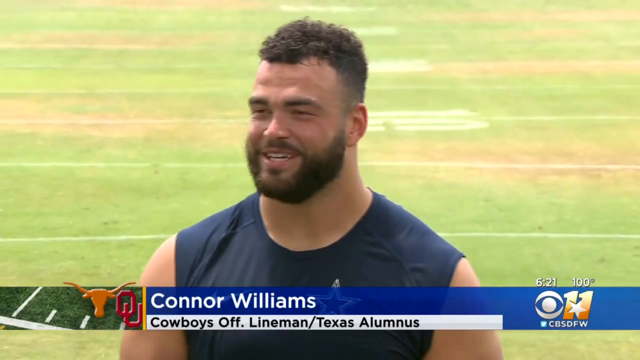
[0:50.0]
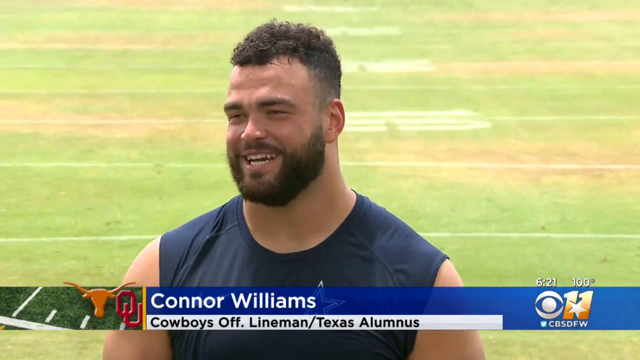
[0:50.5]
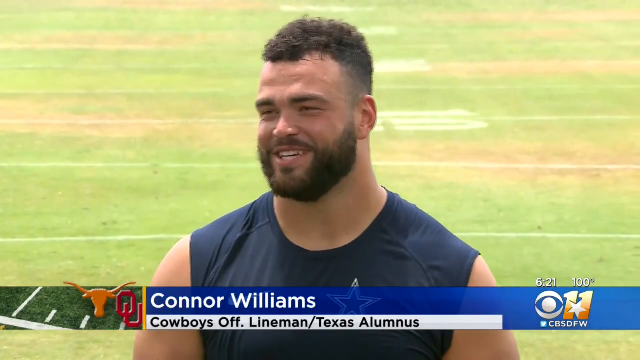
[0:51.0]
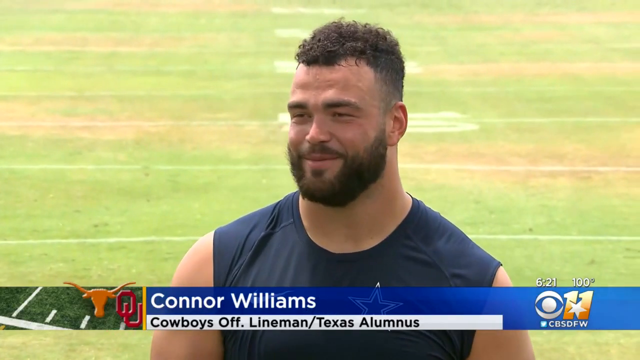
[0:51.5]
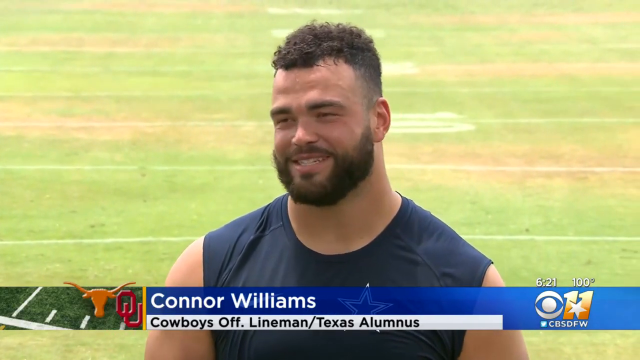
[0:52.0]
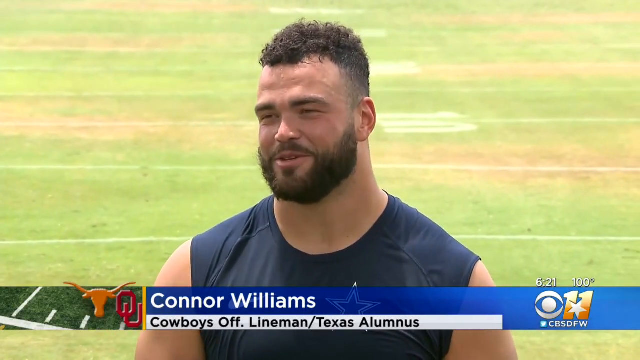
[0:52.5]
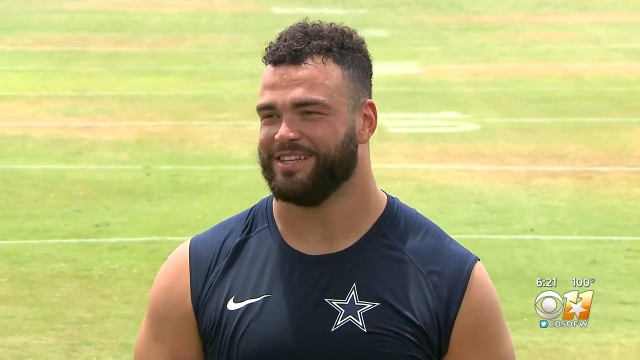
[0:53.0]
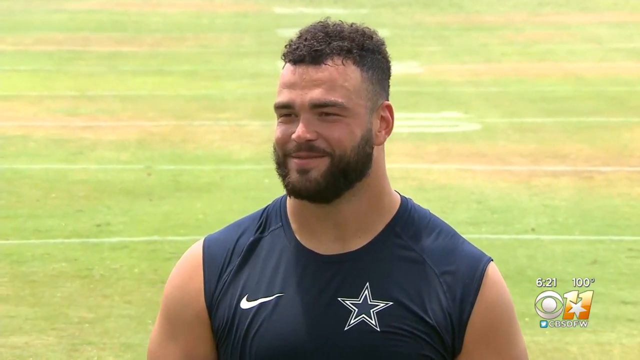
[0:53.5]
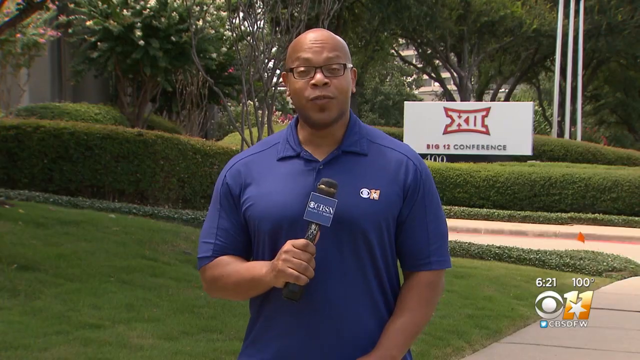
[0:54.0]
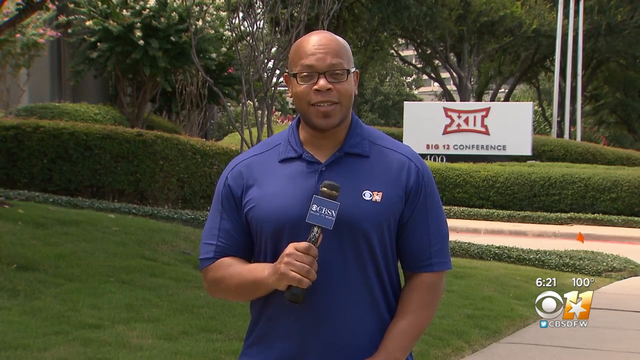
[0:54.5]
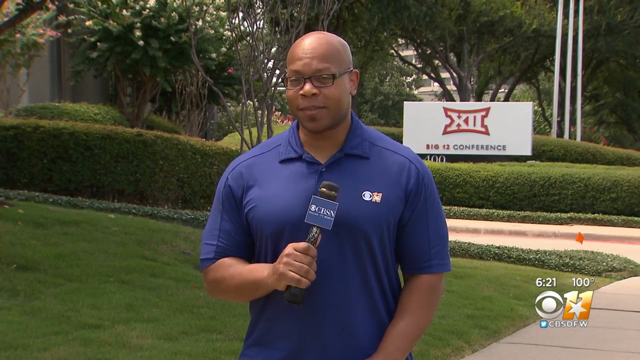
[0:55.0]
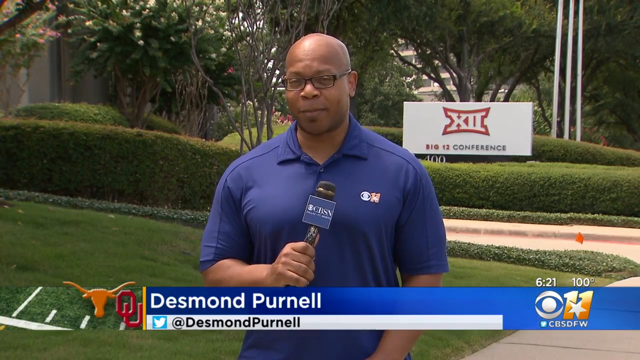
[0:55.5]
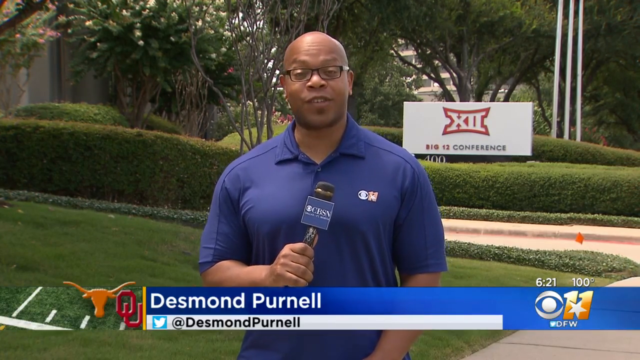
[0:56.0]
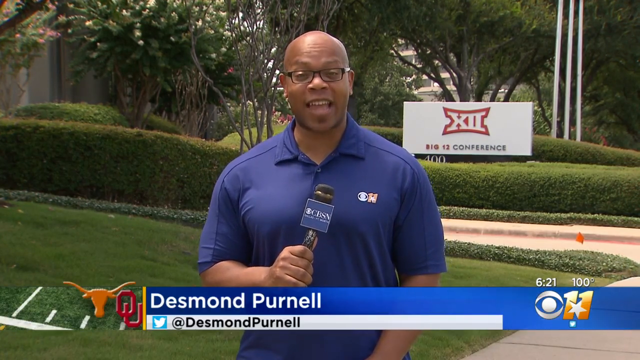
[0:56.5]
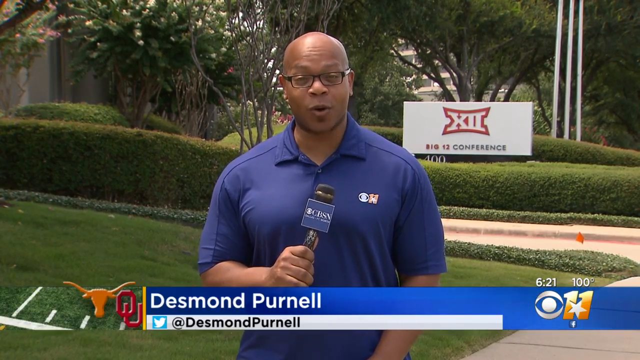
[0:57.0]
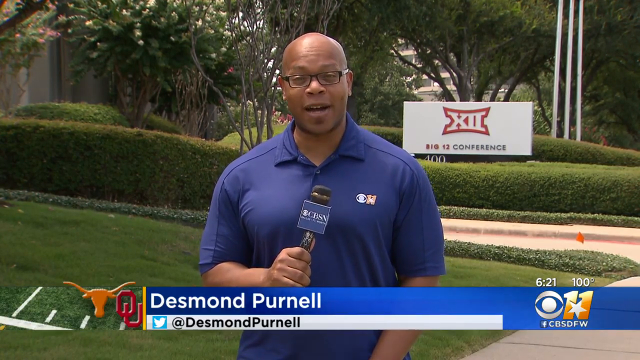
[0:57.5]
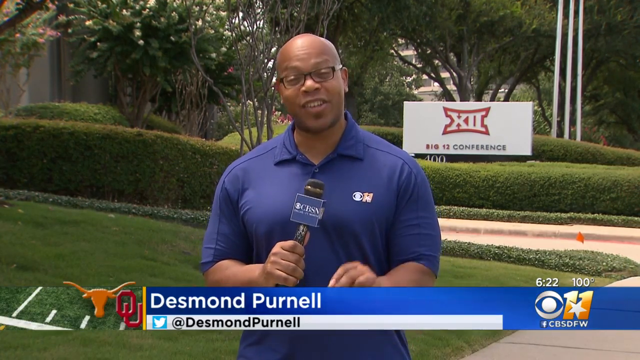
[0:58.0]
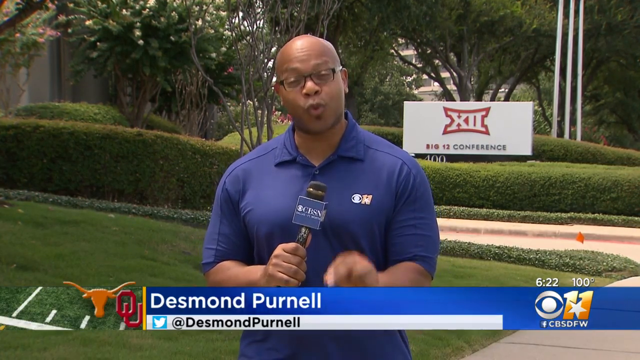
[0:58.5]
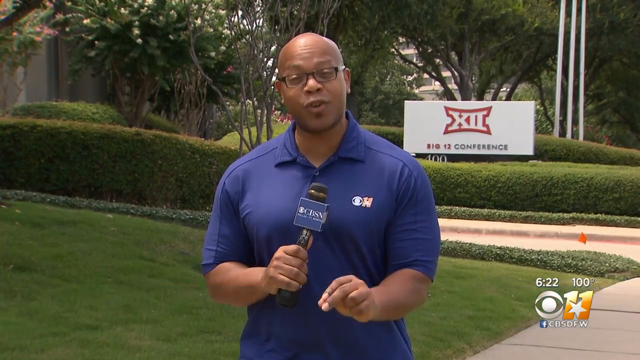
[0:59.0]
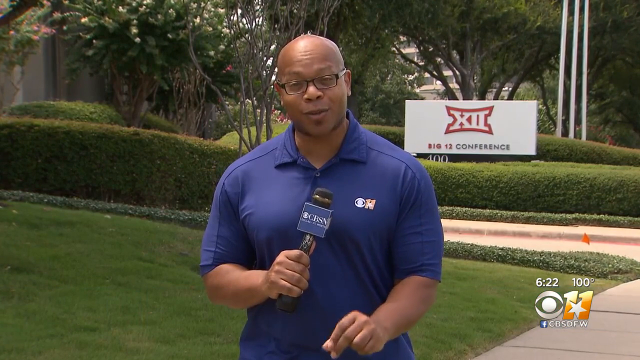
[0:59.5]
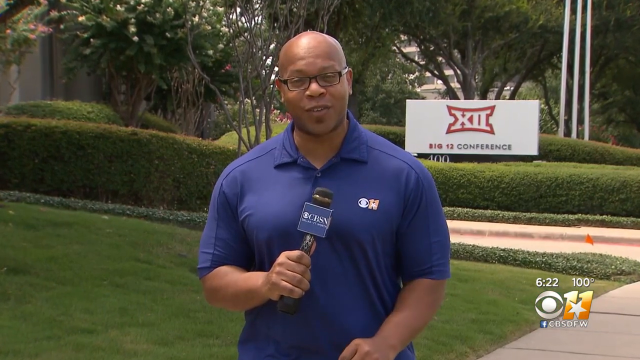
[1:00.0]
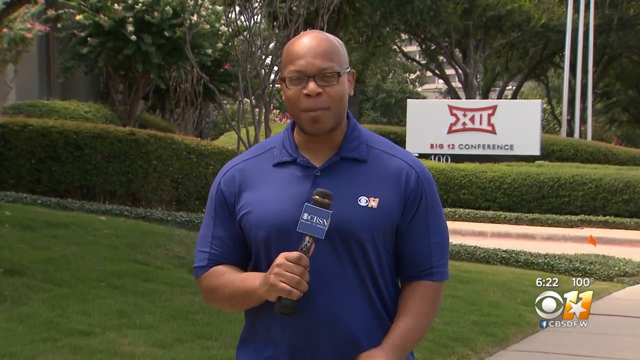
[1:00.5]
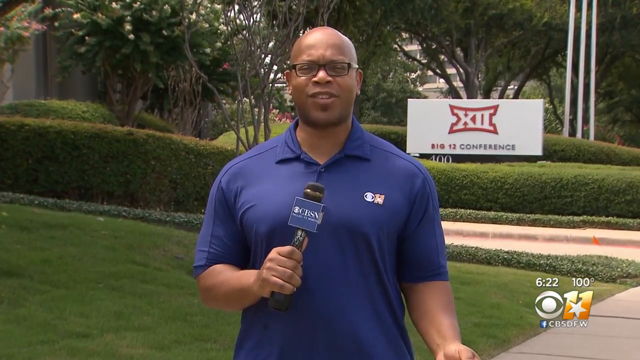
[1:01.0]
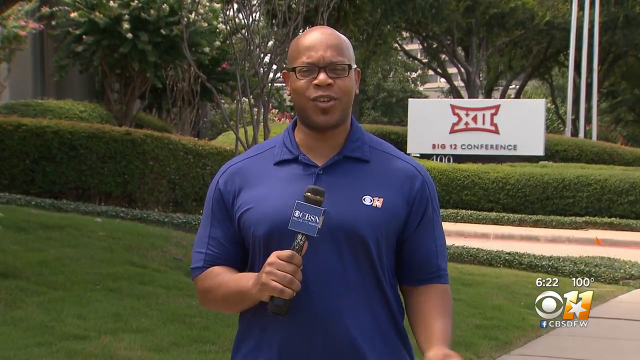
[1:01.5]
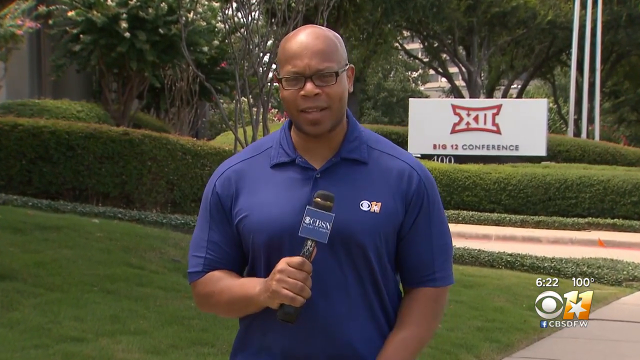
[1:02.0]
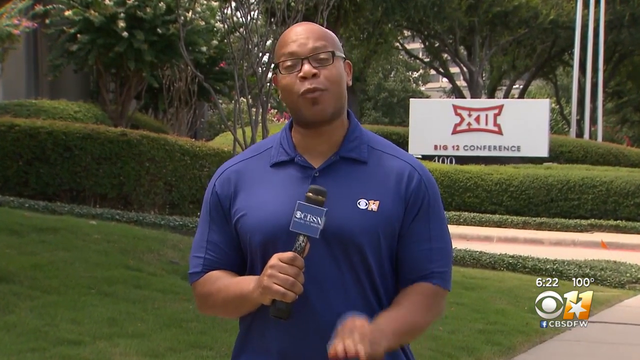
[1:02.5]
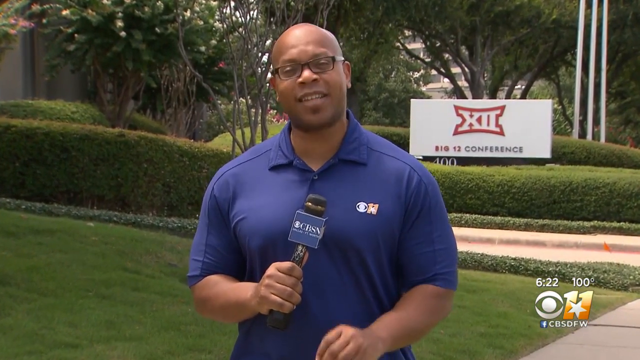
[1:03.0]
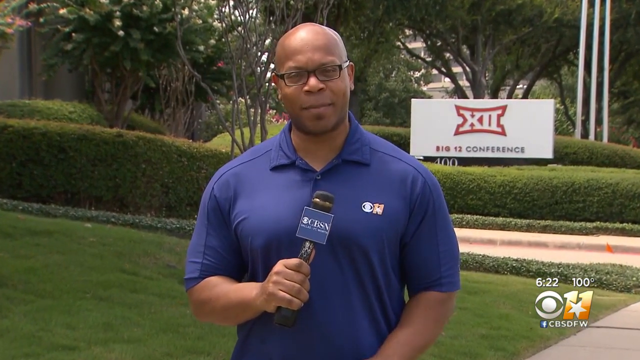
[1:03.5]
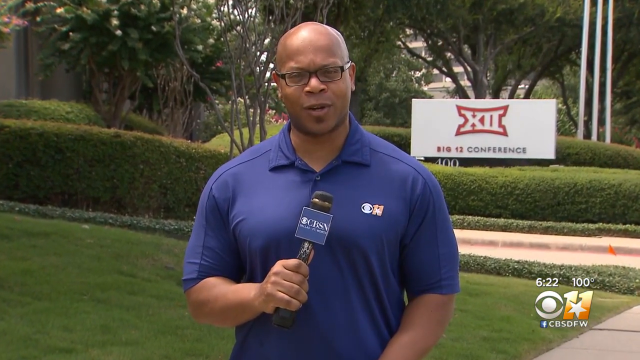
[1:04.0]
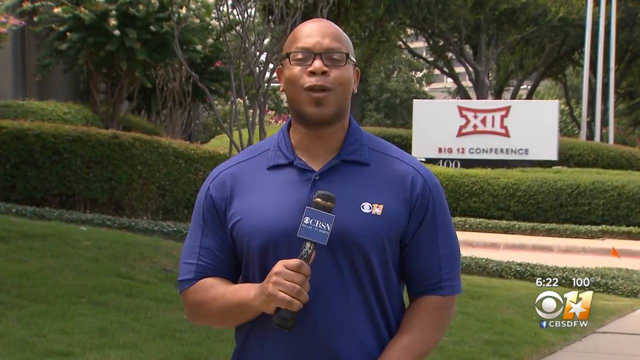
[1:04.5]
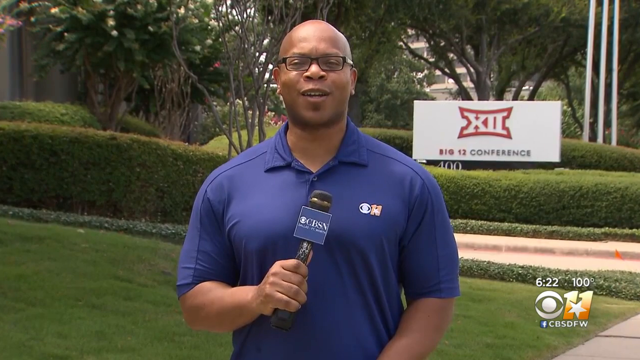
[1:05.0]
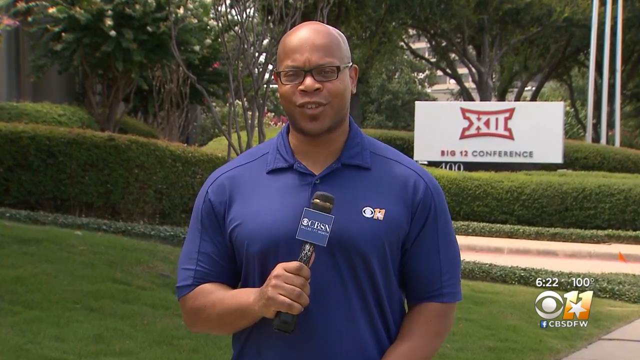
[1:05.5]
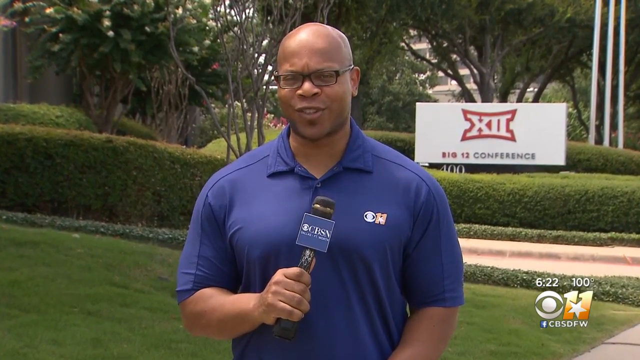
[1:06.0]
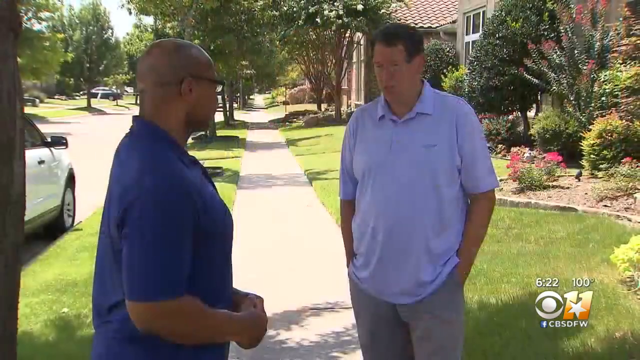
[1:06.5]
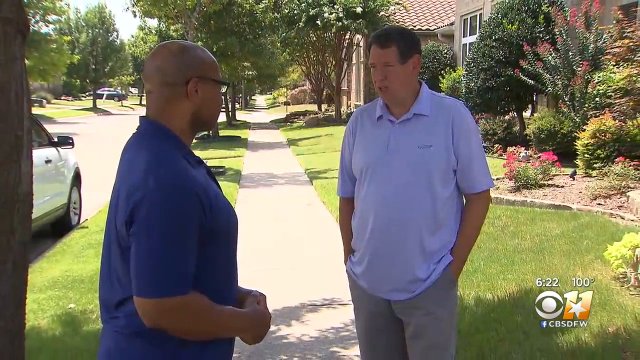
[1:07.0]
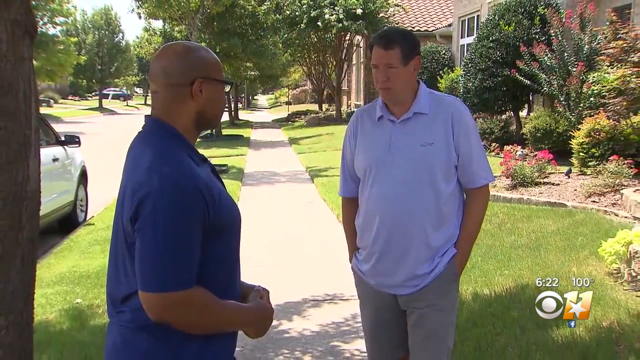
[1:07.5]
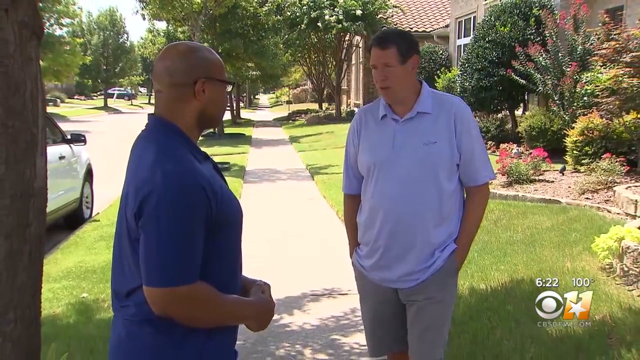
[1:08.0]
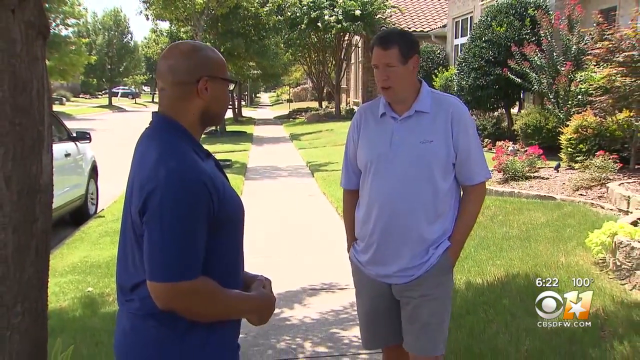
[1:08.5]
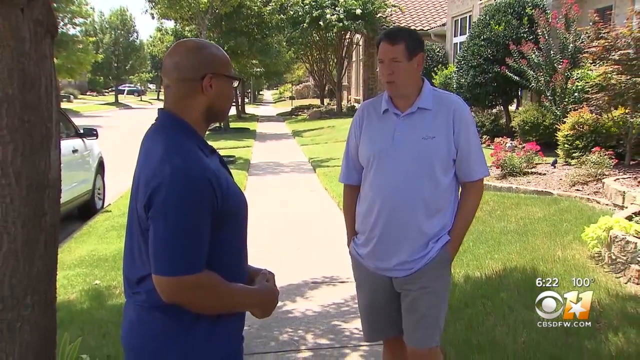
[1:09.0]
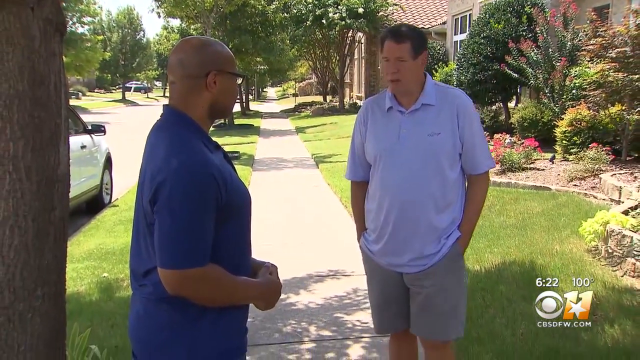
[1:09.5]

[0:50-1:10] Another interview takes place with a man seen earlier, Connor Williams, who wears a casual sports top with the Nike logo and a star on it. The video then goes to a news reporter, Desmond Purnell, holding a microphone that says "CBSN". He stands in front of a headquarters, possibly of the Big 12 conference, with a sign in the background, and talks to the camera calmly. The gardens behind him look very well maintained. The video cuts to the reporter speaking with another man, possibly a member of the public, in a residential area; the man seems to be discussing the topic.